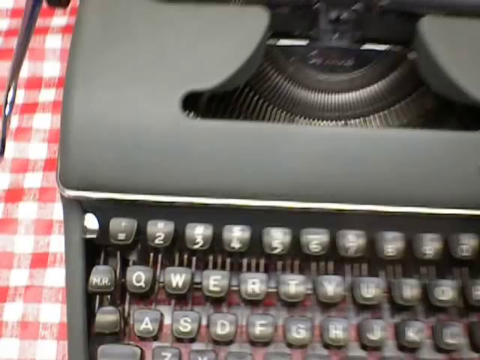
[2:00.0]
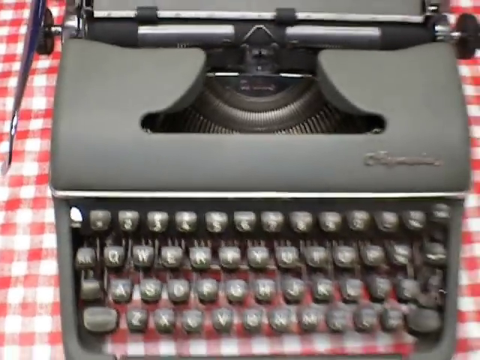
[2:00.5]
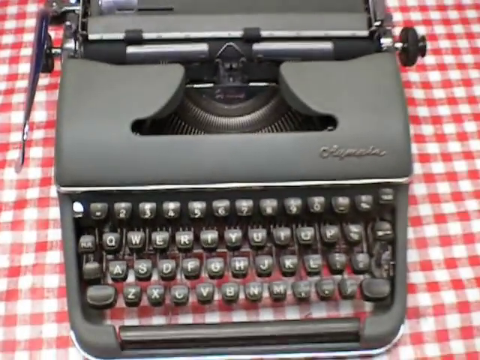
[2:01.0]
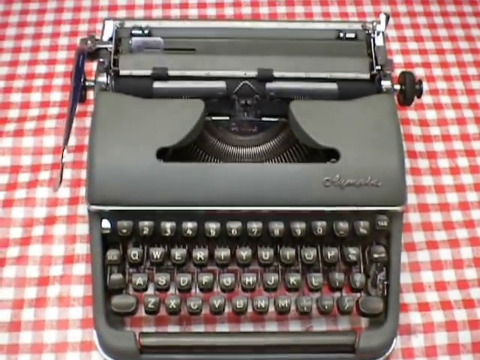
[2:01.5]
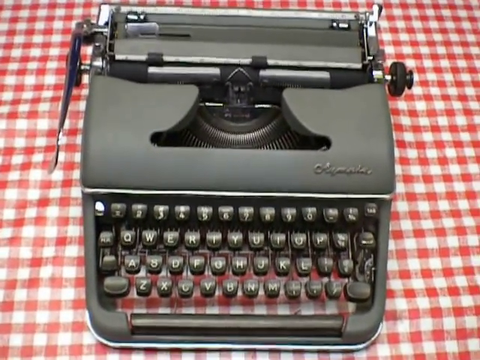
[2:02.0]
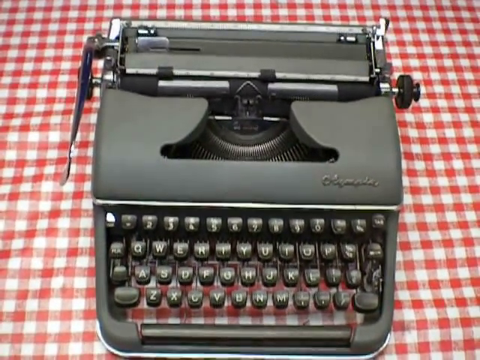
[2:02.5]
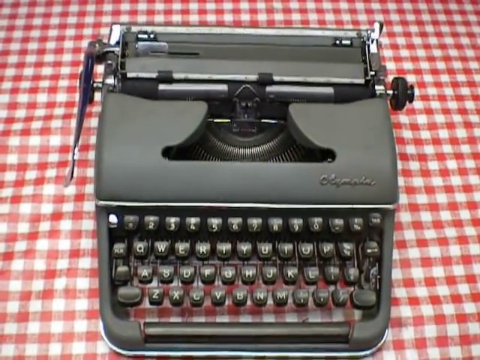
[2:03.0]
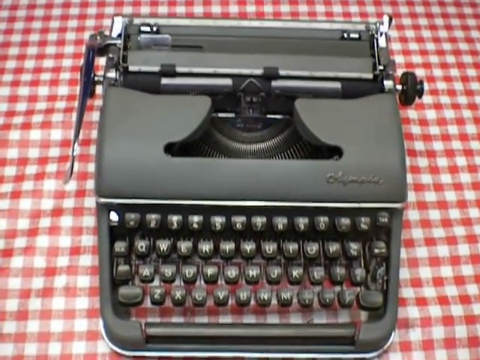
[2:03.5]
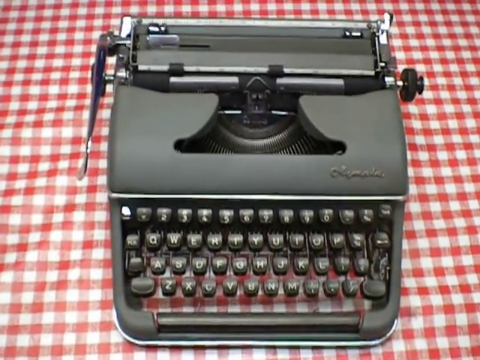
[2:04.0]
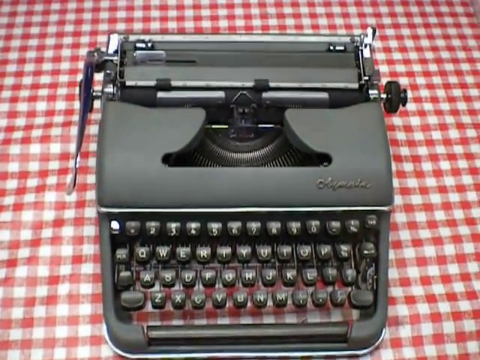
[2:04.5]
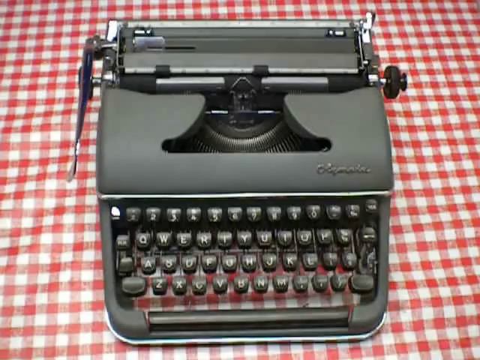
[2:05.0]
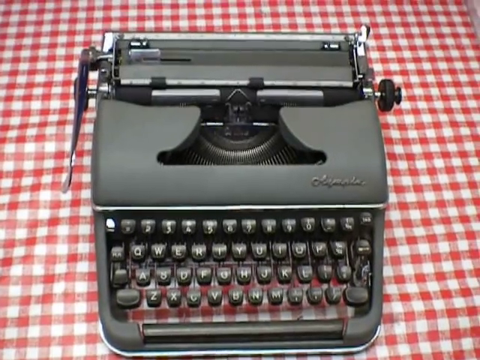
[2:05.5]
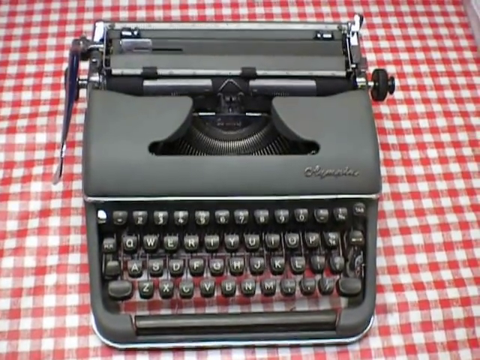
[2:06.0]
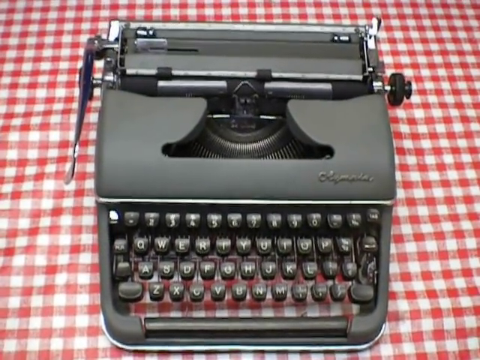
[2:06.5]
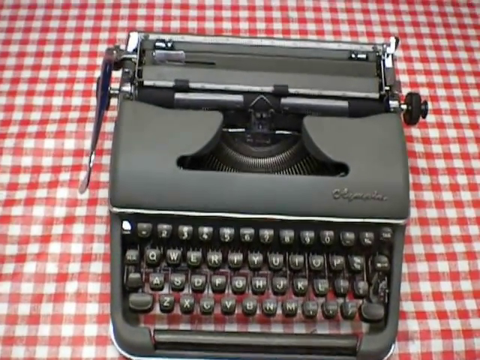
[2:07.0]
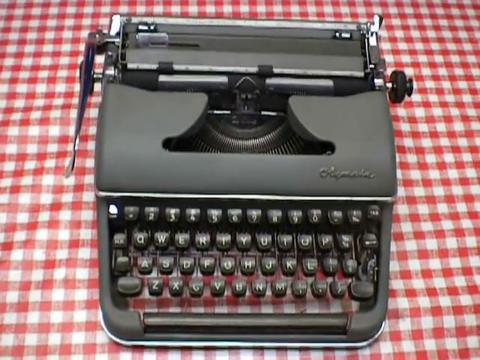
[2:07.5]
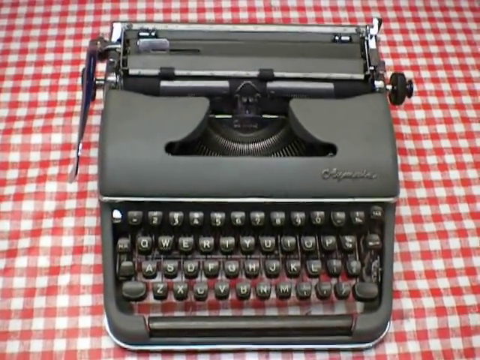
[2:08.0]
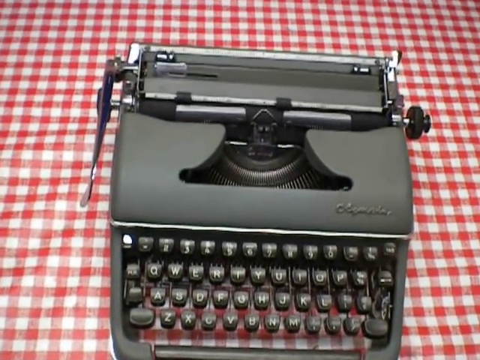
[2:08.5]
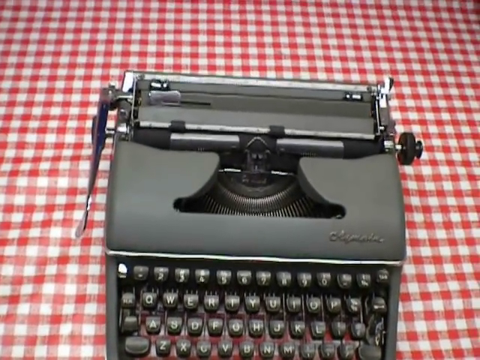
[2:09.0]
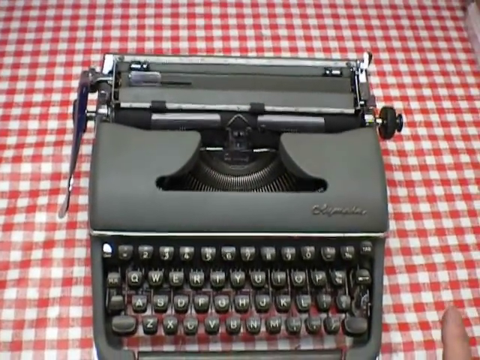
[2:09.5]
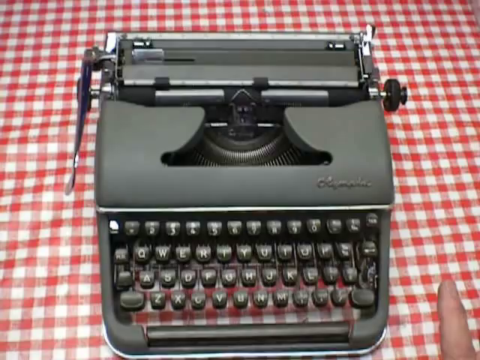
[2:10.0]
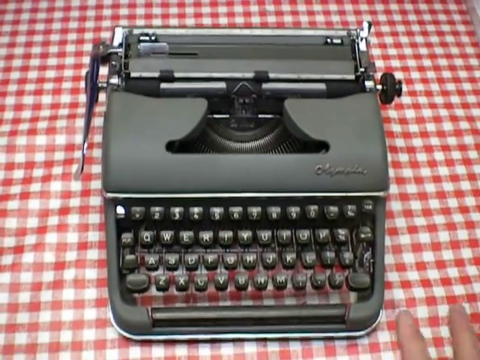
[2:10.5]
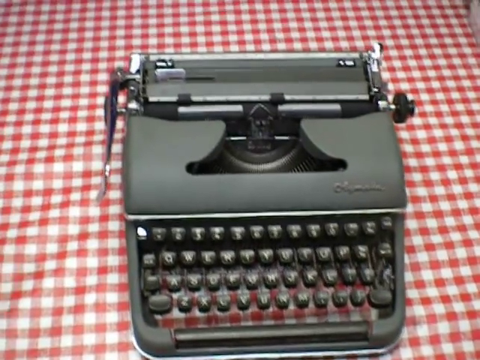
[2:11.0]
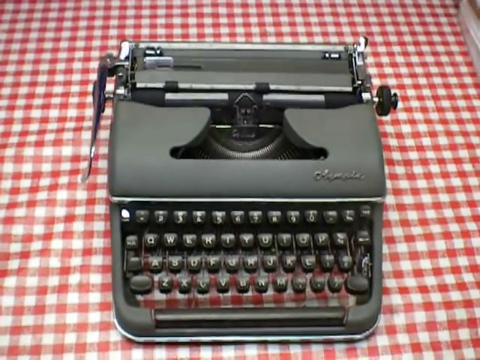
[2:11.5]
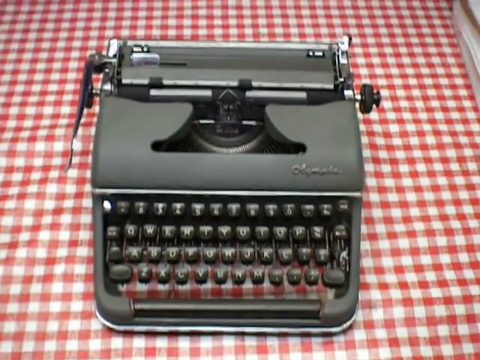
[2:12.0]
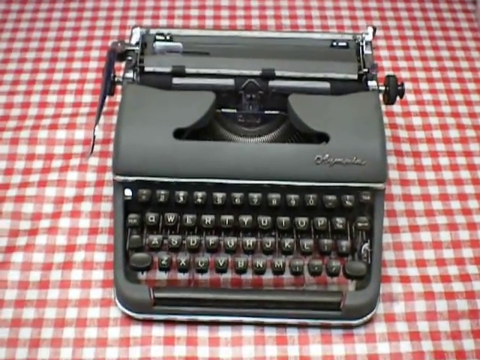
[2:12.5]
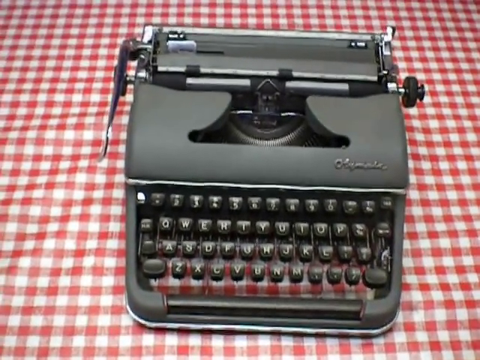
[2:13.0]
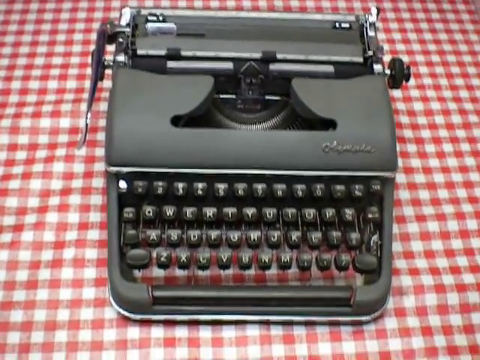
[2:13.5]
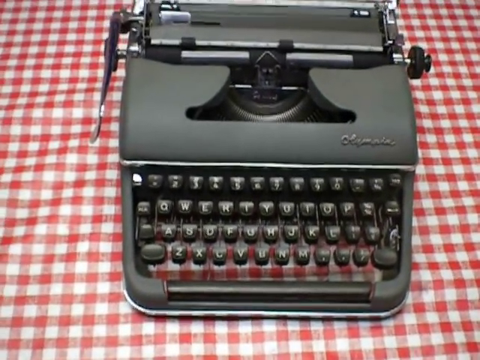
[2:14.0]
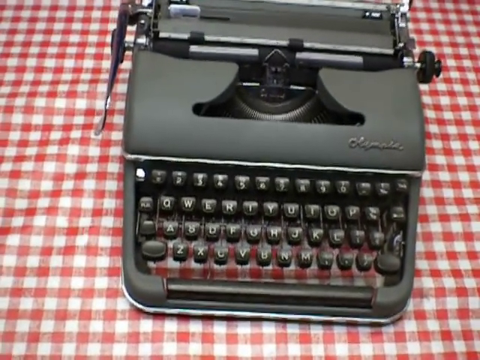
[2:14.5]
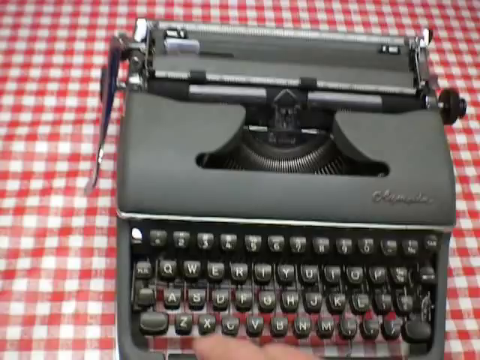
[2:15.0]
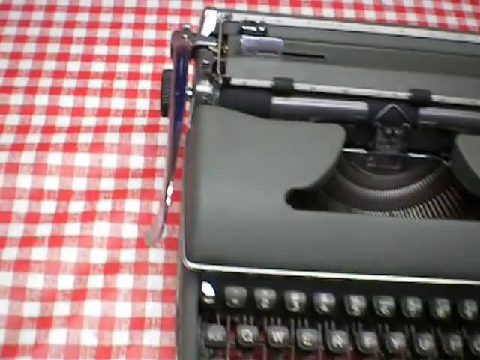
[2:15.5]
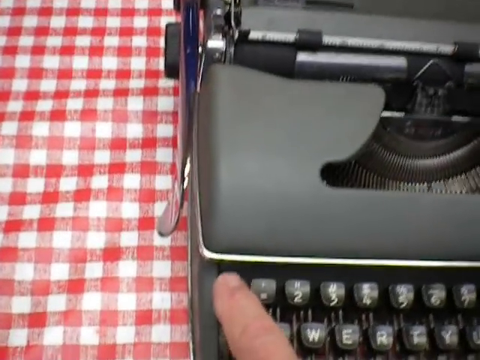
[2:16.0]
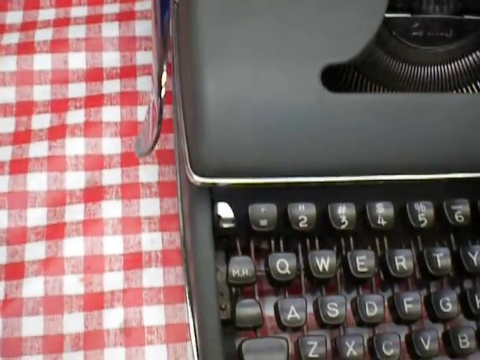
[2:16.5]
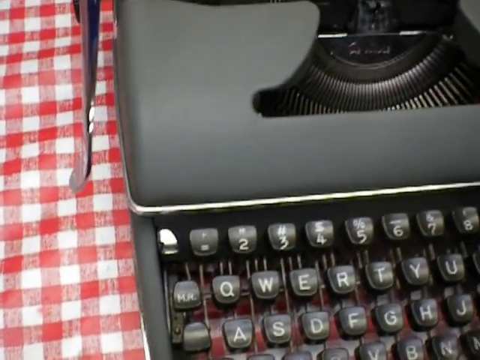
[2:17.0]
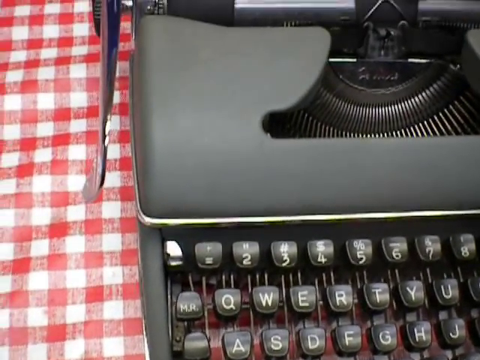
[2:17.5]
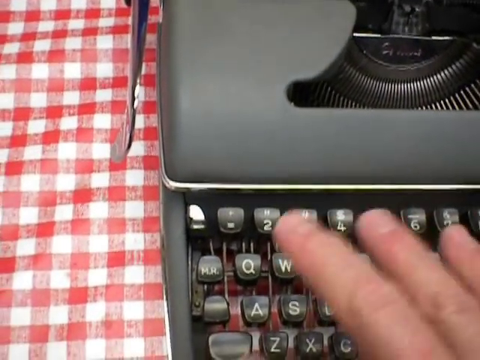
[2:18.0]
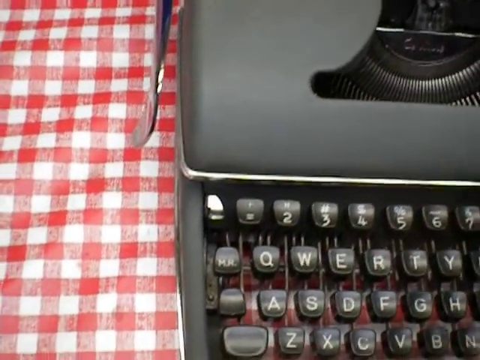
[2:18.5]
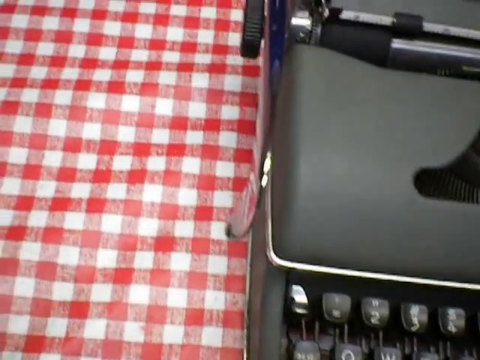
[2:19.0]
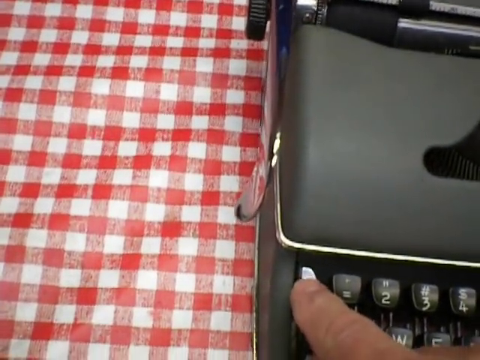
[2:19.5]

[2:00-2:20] An old, vintage Olympia typewriter sits on a table covered with a tablecloth in a small red and white design. The camera pans out to show the entire typewriter sitting on the edge of the table. It is slate gray, with black buttons bearing white letters or numbers. The image zooms in to the upper left side, to a small silver lever to the left of the number one key, where a man's hand touches it and moves it up and down. He then waves his hand in the air over the keys without touching them, and touches the small silver lever just left of the number one button once more. The image then zooms in to the upper left side of the typewriter as the video ends.